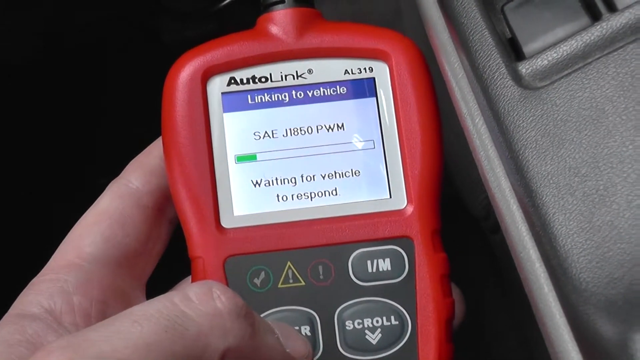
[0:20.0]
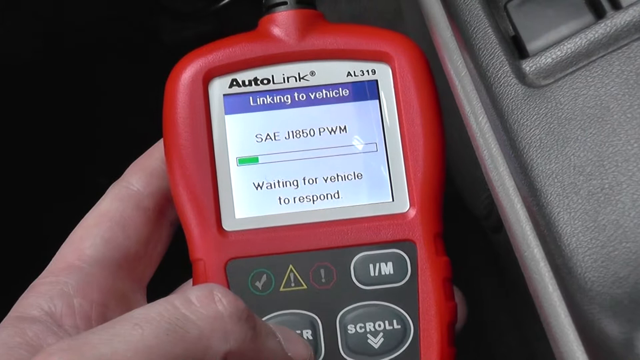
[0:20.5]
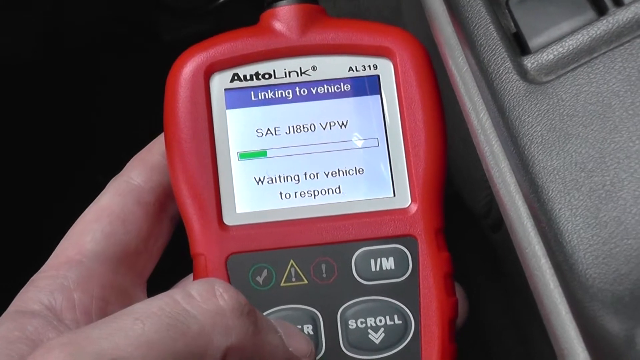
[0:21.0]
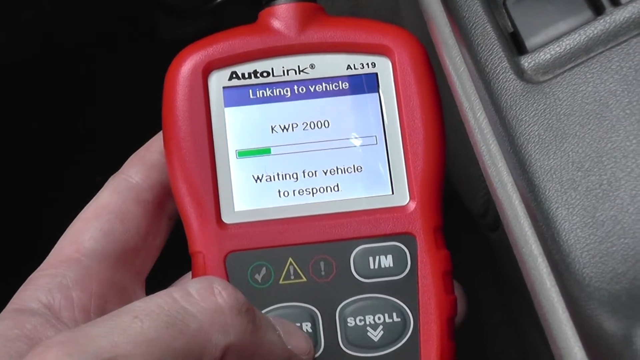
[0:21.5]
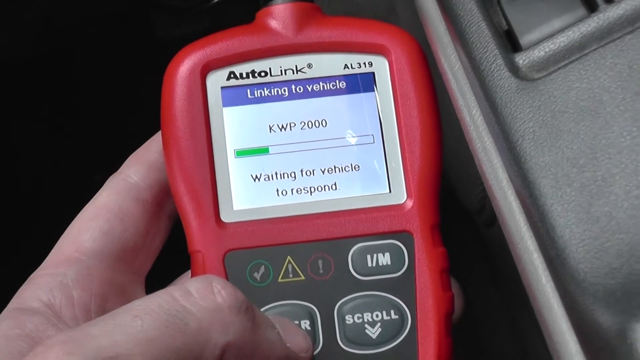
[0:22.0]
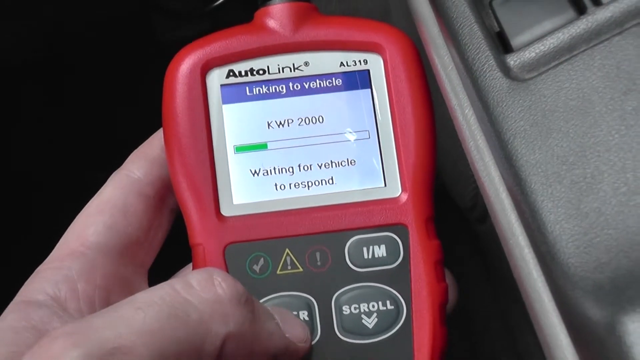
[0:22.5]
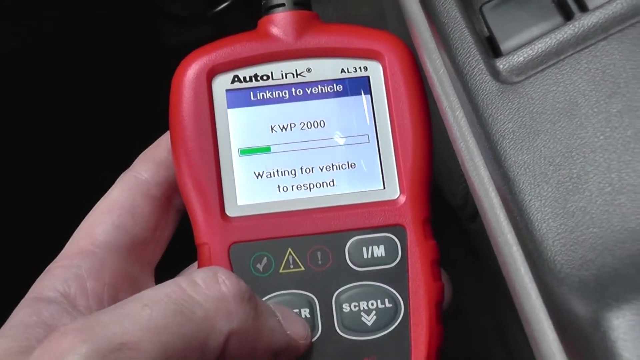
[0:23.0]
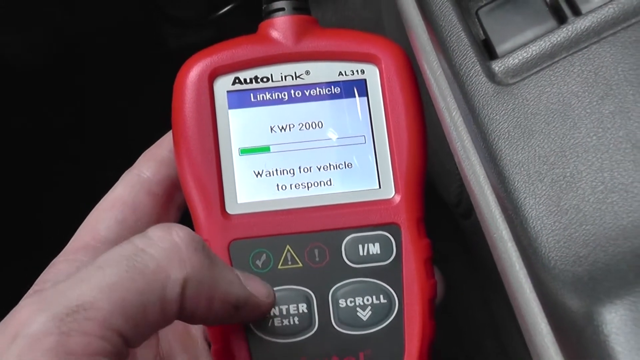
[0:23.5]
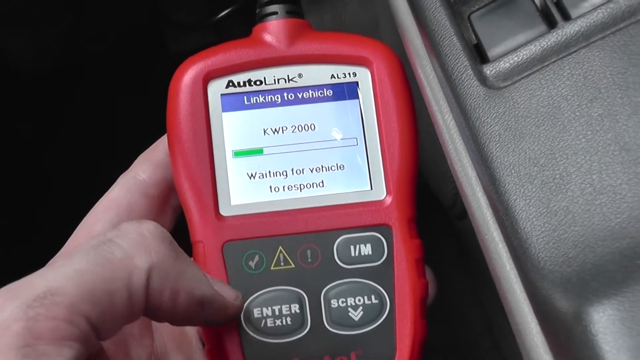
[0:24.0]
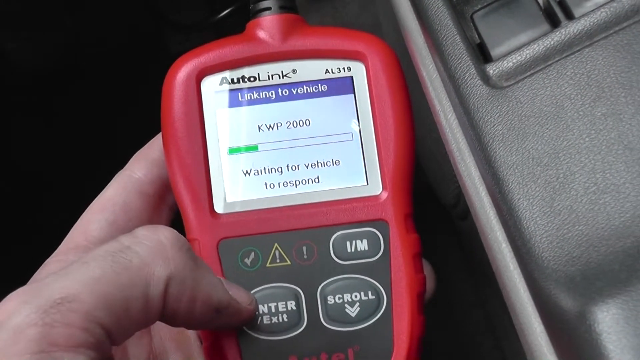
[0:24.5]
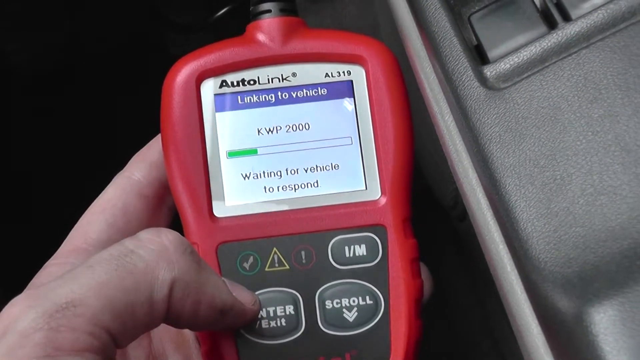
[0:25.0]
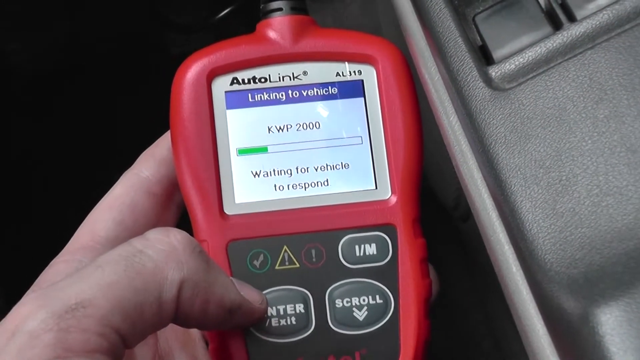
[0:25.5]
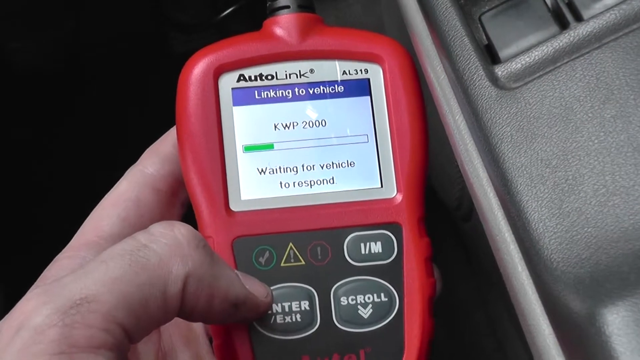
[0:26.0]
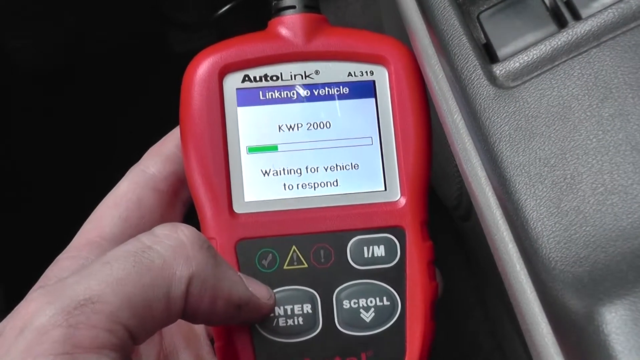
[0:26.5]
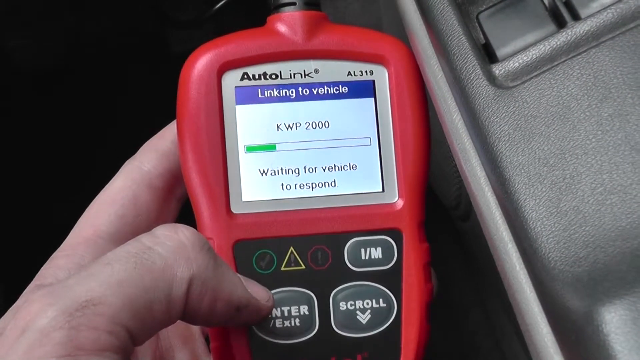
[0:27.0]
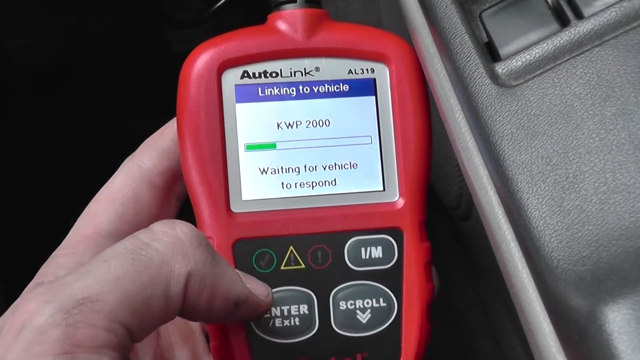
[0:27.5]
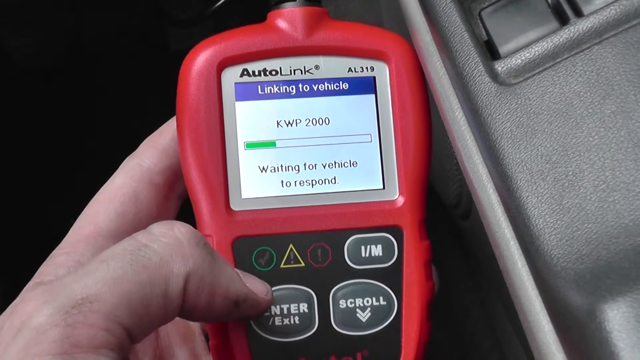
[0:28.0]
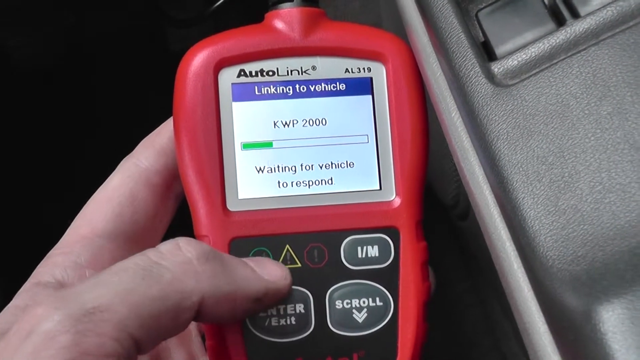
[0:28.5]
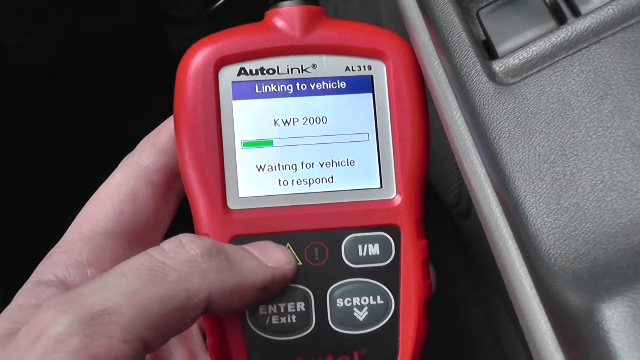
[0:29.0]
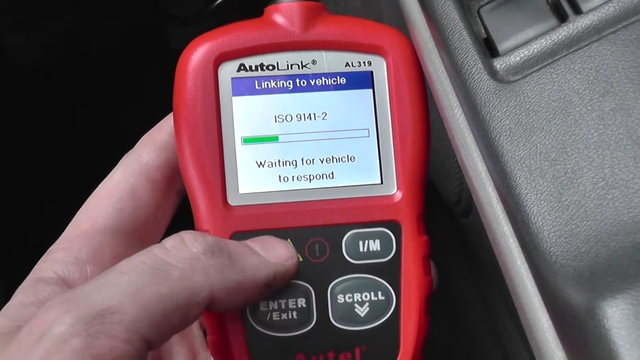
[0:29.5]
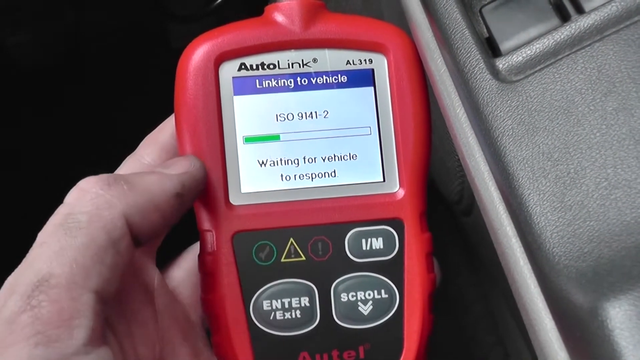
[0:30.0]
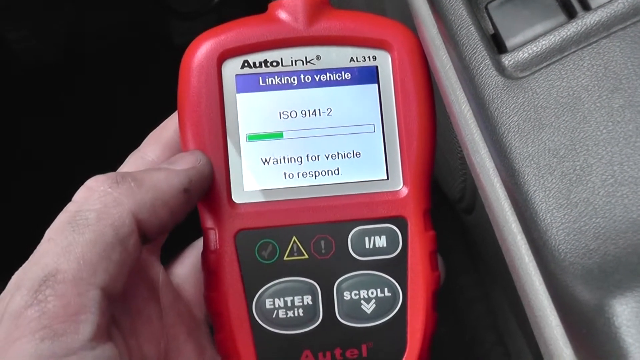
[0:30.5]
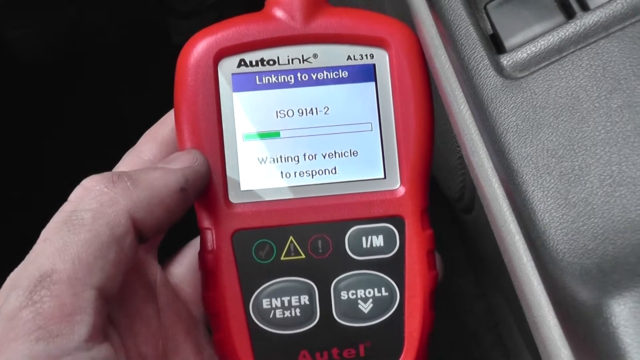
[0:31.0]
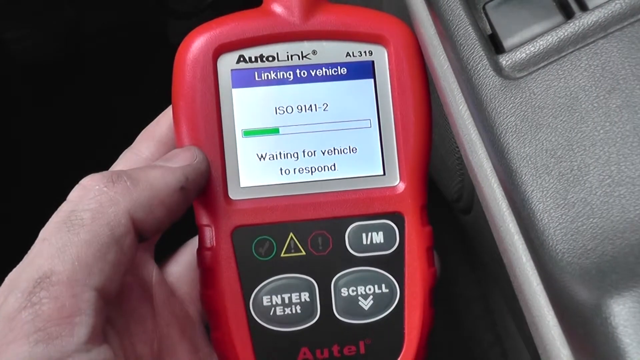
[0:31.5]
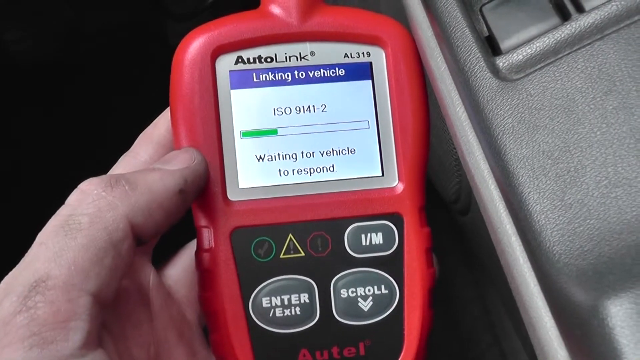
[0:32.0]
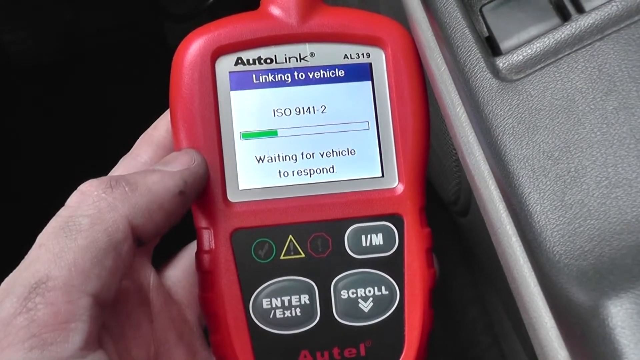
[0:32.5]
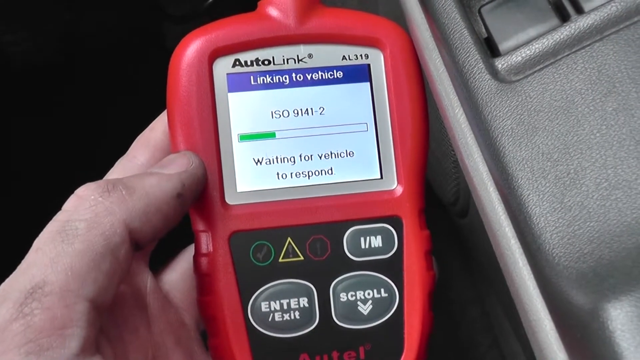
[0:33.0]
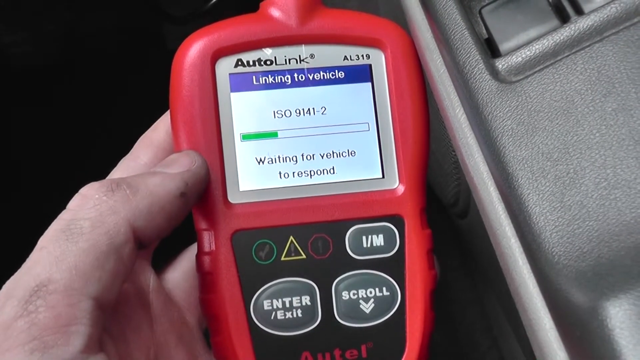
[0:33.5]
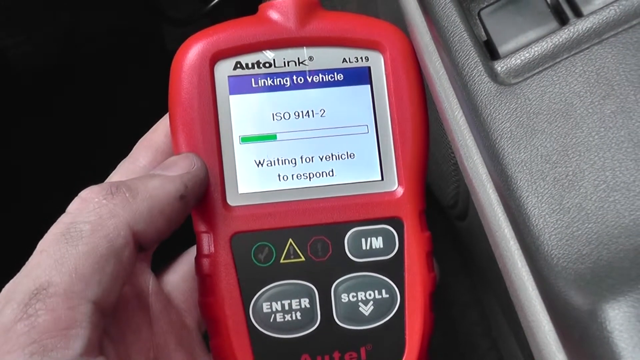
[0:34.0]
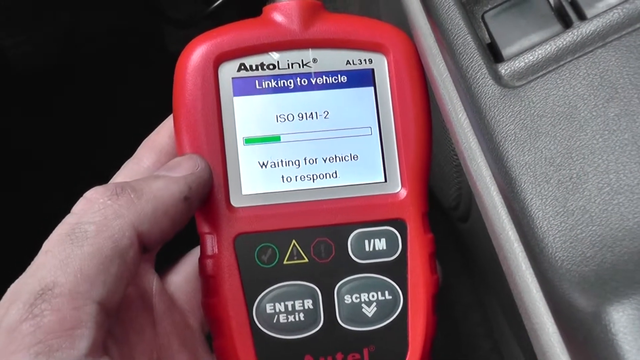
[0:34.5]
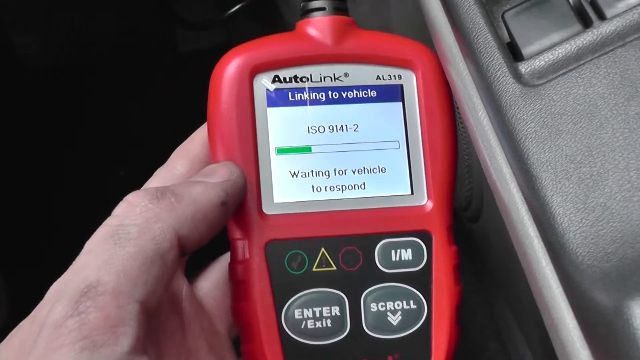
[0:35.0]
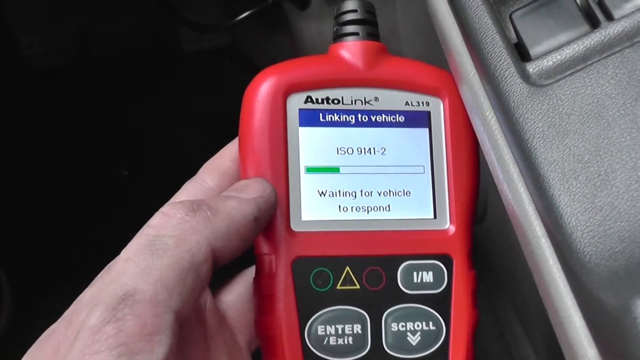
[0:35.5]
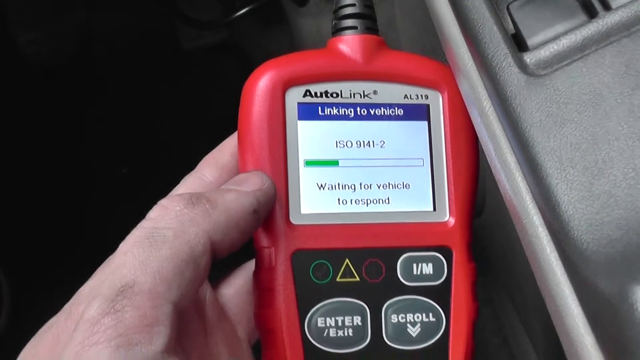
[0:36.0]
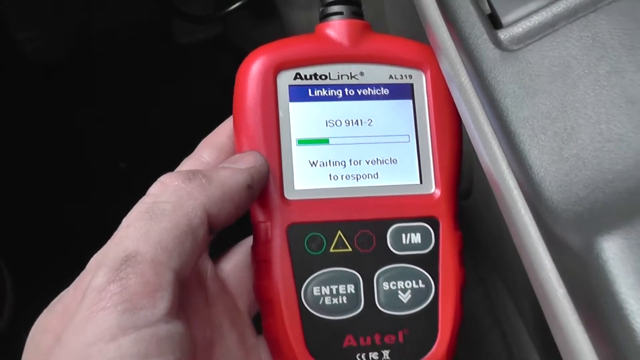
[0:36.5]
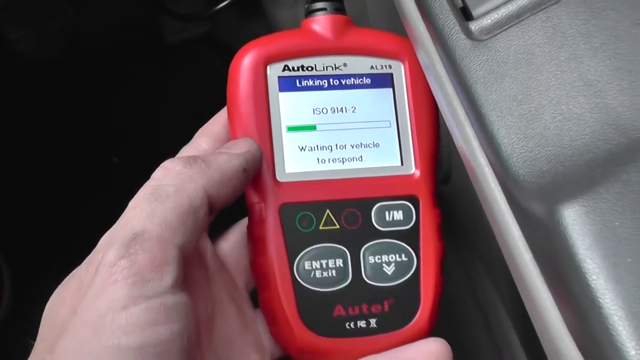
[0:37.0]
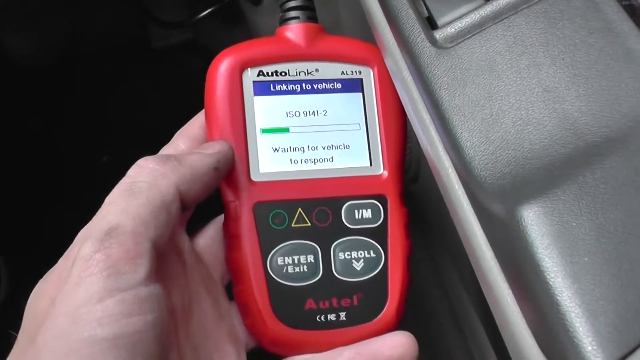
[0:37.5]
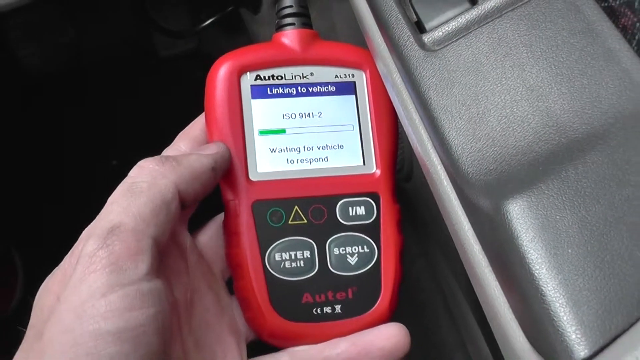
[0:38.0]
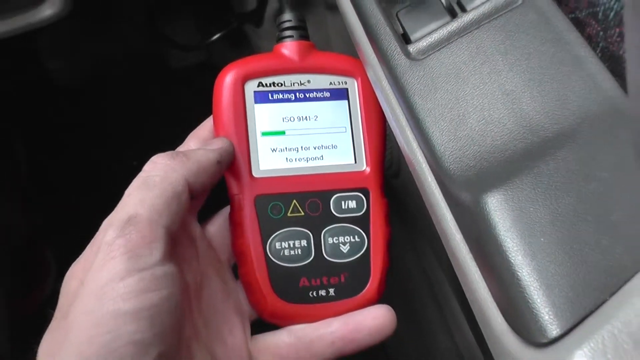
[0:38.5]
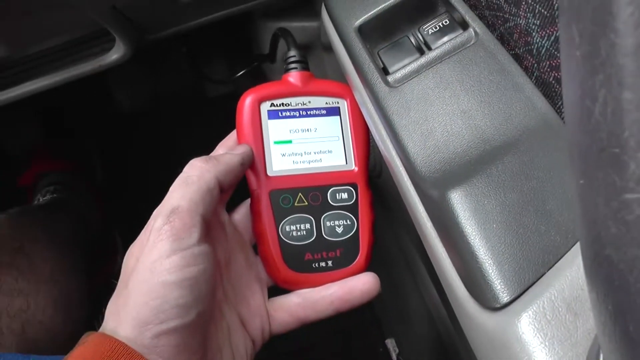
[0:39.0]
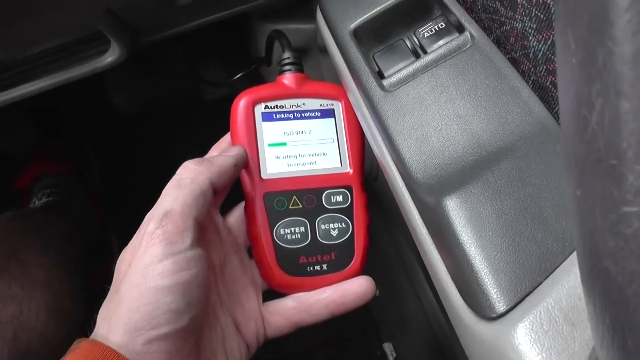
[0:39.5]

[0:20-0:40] The small red, blue, and red-and-white handheld device is in the mechanic's left hand, his fingers underneath its back and his left thumb in position over a button. He touches the enter button, then moves his thumb up and appears to touch the button showing a yellow triangle with an exclamation point inside. On the screen, "AutoLink" is on the left side and "AL319" on the upper right. Beneath this, the screen shows the device linking to the vehicle, and below that are the words "KWP 2000". Under this is a rectangular indicator bar with a green portion on its left side, and beneath that the screen shows it is waiting for the vehicle to respond. The camera zooms back out and then zooms back in to the device.